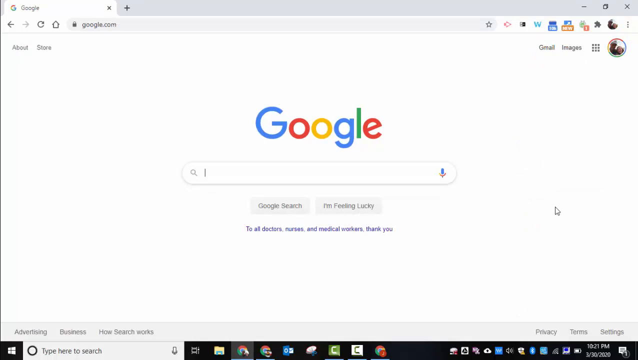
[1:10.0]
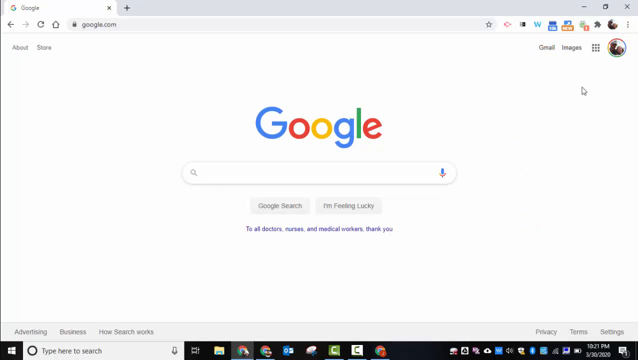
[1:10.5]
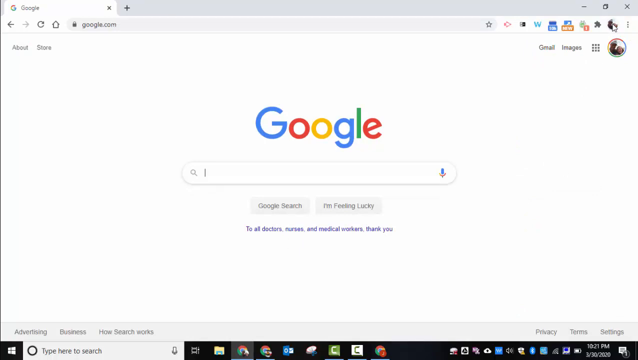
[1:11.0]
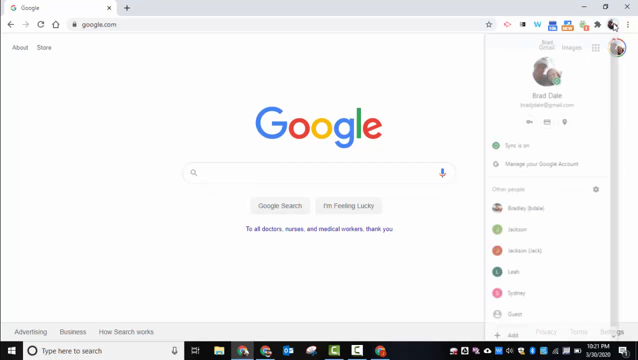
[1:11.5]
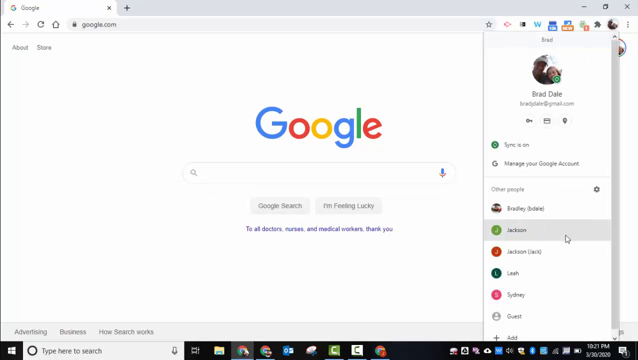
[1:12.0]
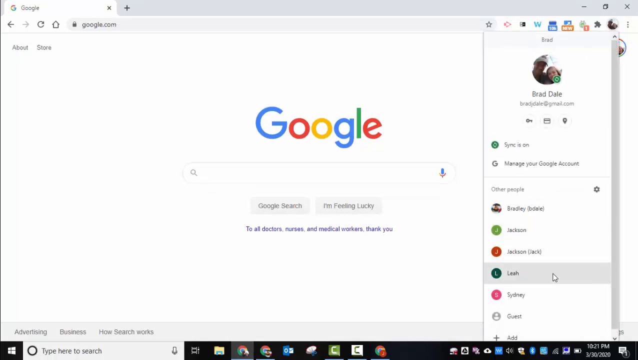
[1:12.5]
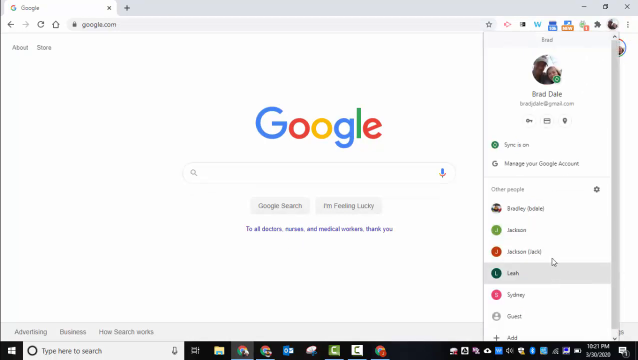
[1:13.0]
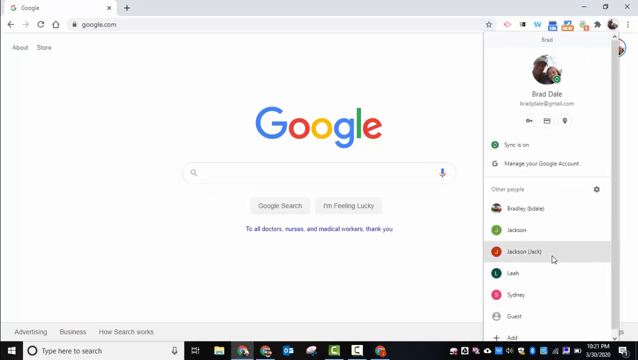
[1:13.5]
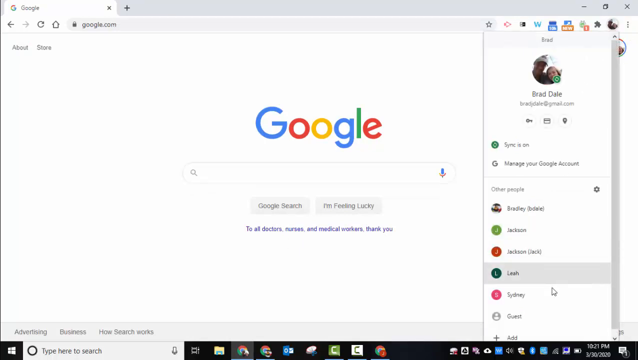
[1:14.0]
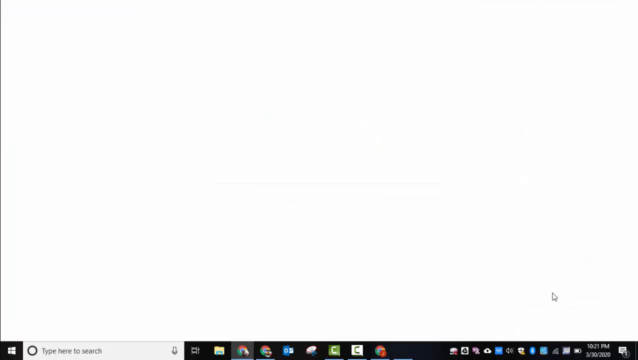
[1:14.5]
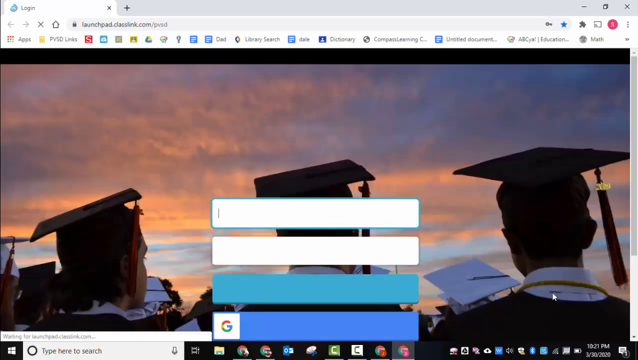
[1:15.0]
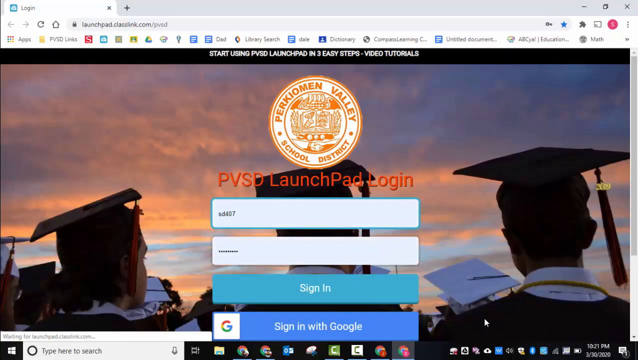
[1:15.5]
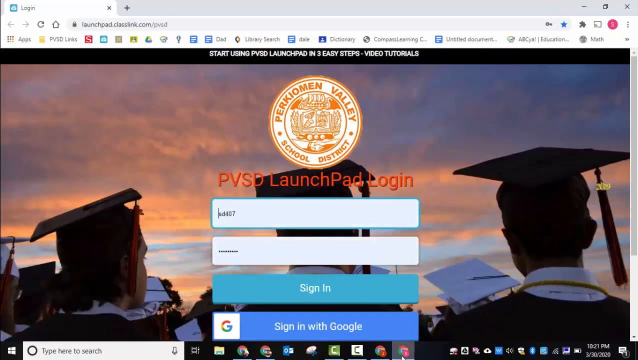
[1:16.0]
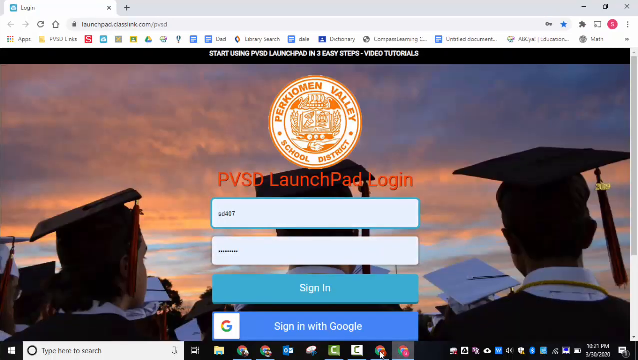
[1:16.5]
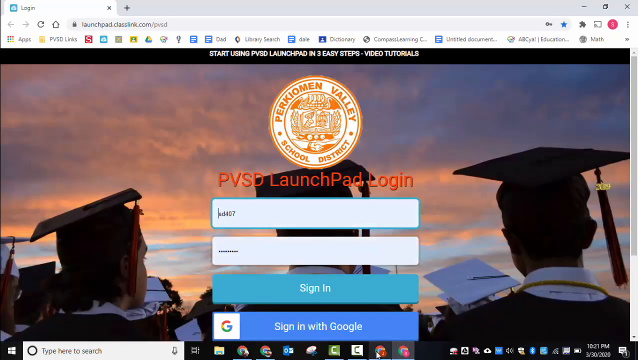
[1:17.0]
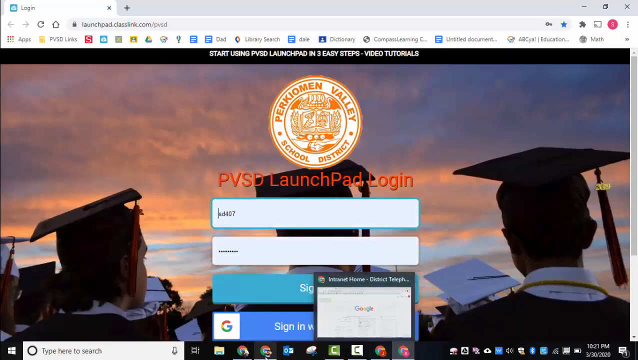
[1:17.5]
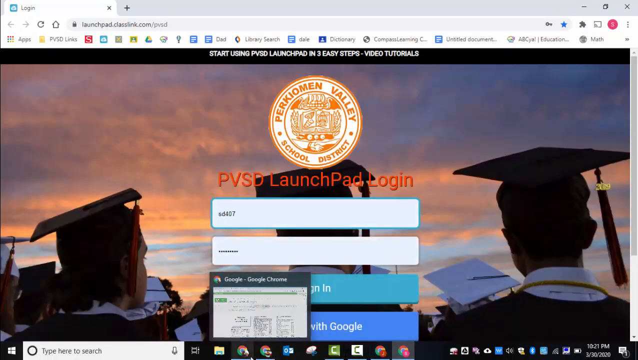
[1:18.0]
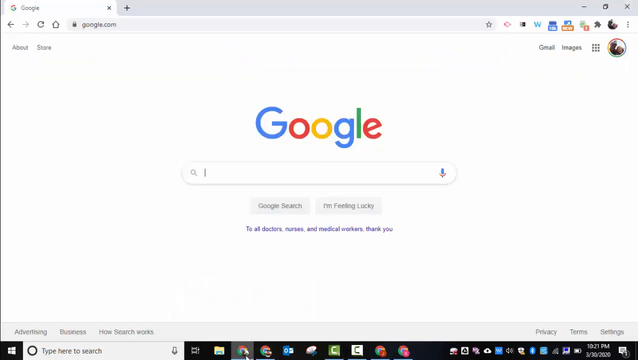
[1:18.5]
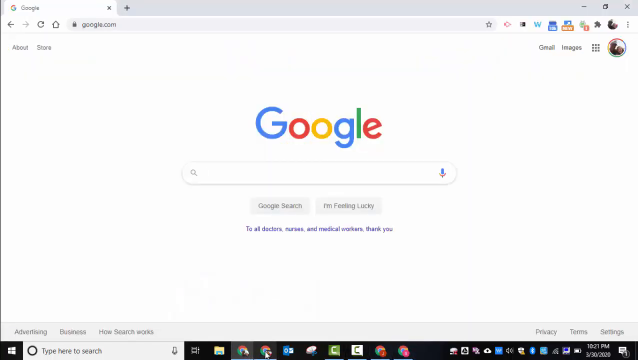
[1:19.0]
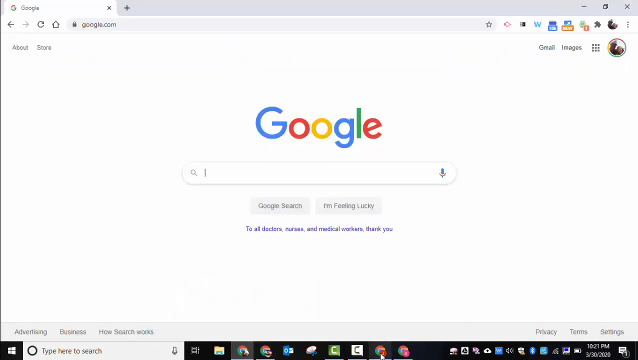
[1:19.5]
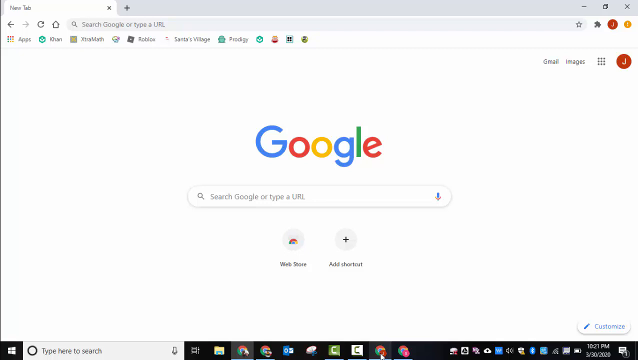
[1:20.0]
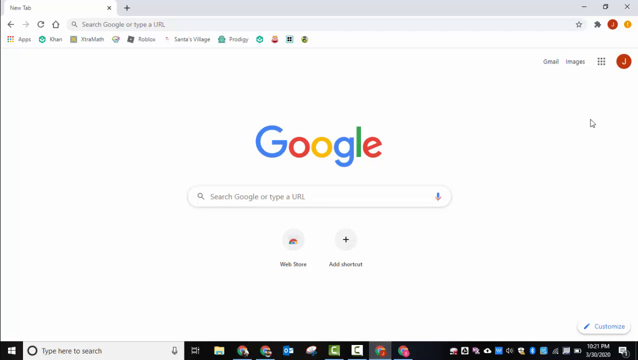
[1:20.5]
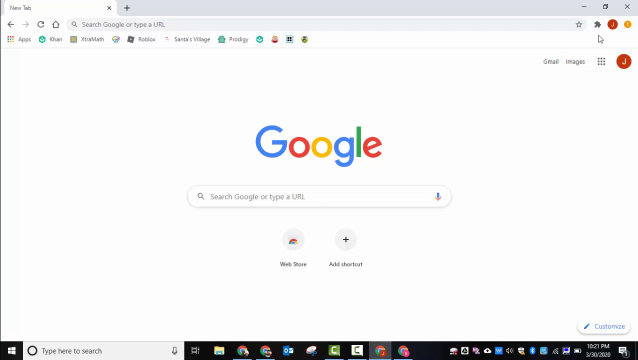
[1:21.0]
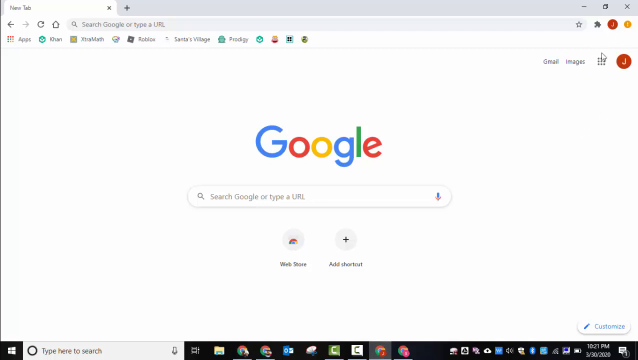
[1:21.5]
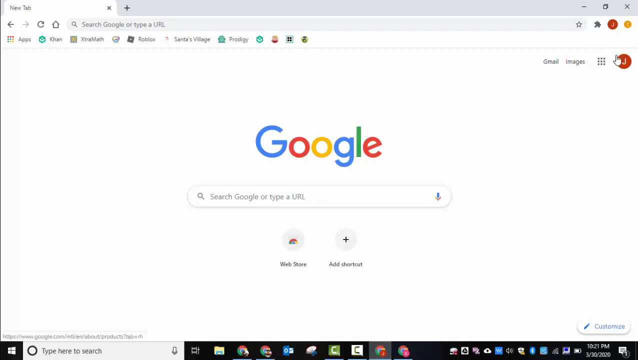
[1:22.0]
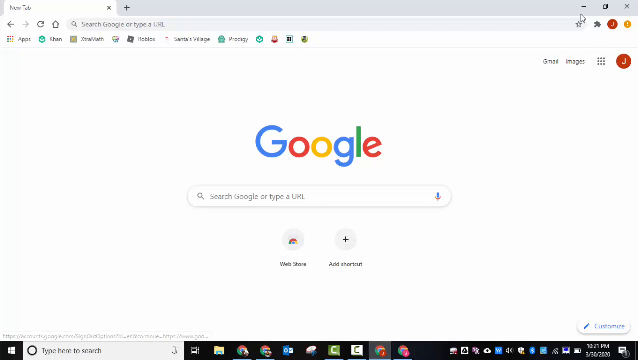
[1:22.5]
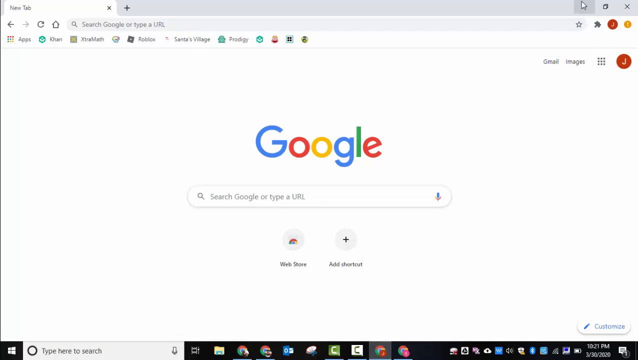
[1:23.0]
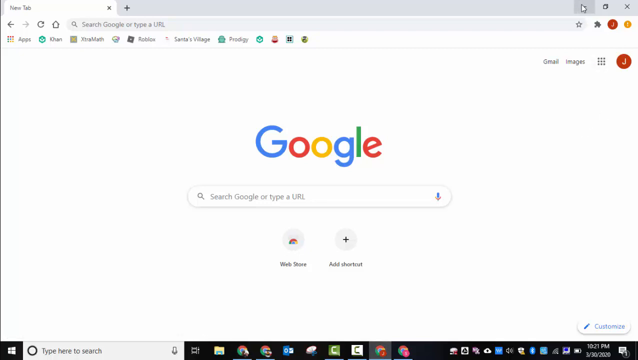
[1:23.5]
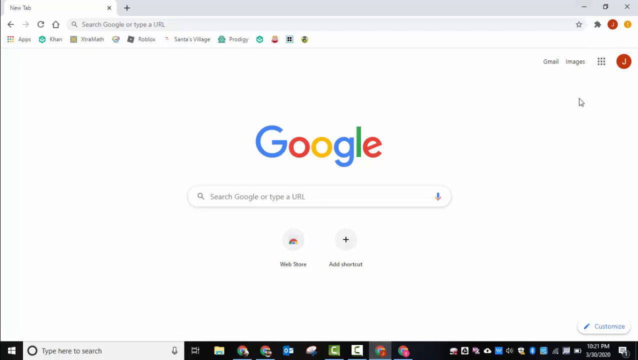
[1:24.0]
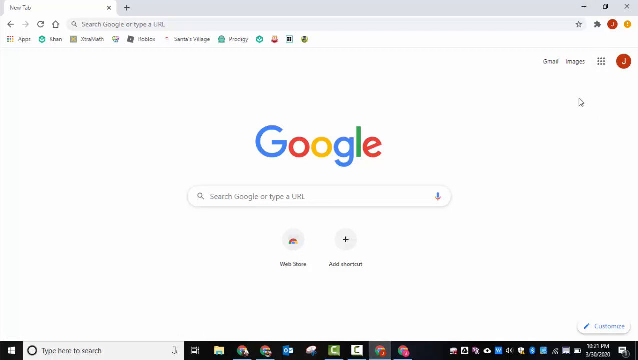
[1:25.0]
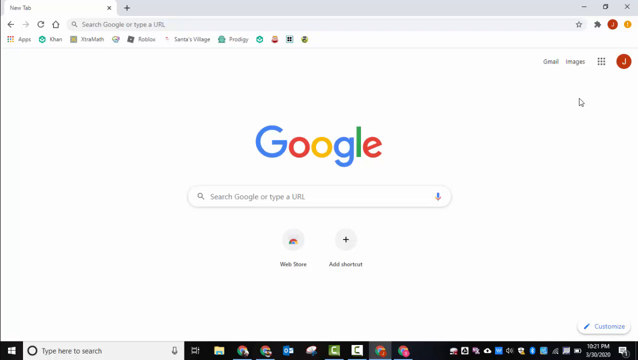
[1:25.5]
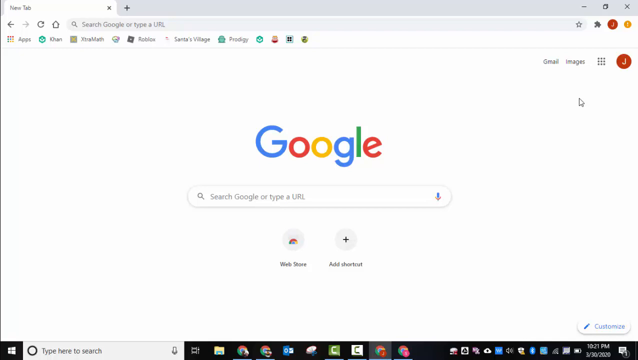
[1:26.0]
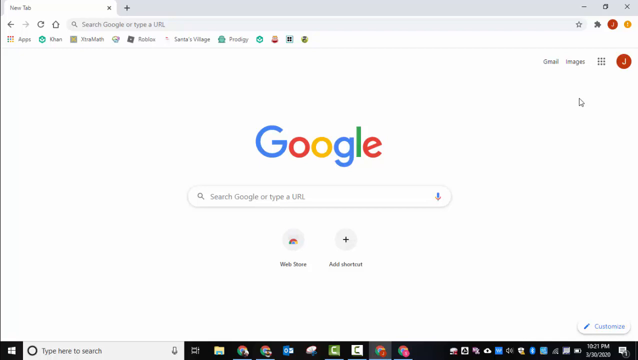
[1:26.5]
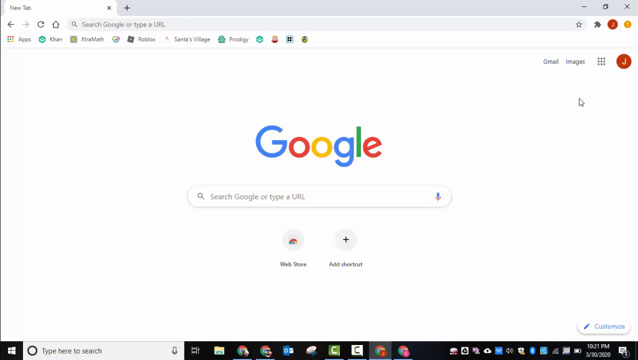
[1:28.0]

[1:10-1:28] The video shows how to navigate between the accounts. An account is chosen, details are entered, and the account is logged into. Afterward, the page is closed and the view returns to the main page.